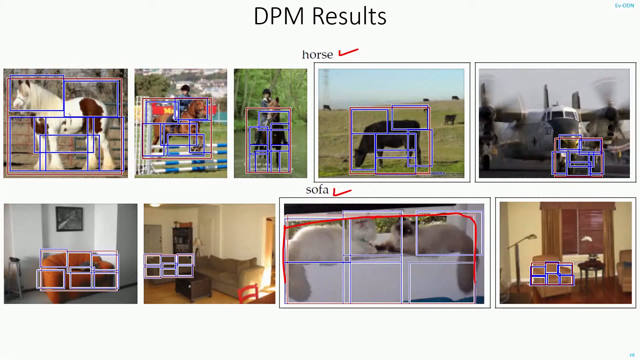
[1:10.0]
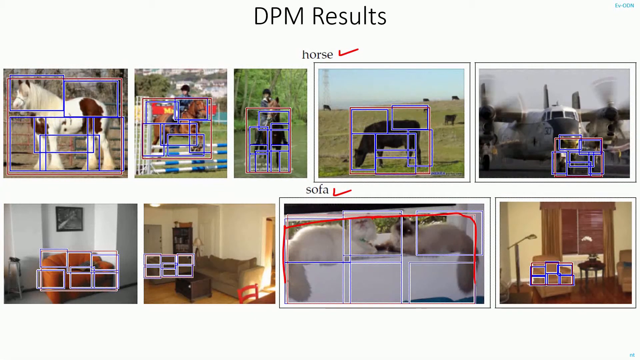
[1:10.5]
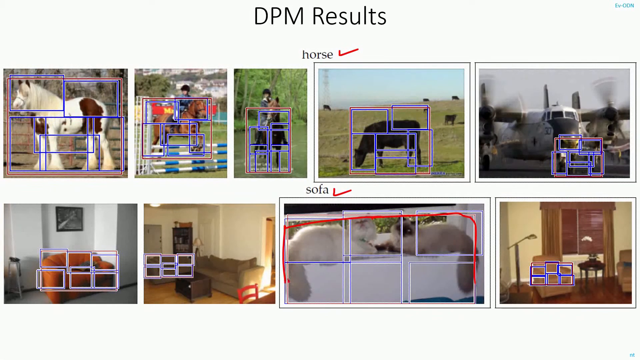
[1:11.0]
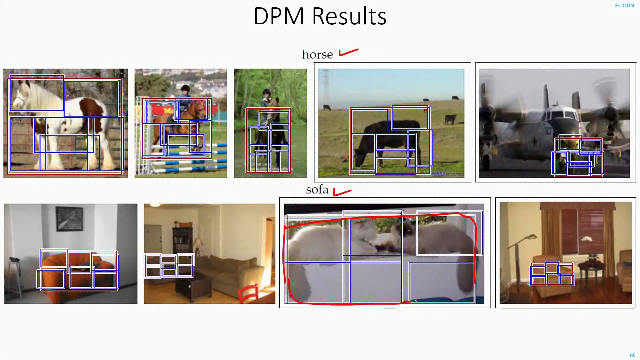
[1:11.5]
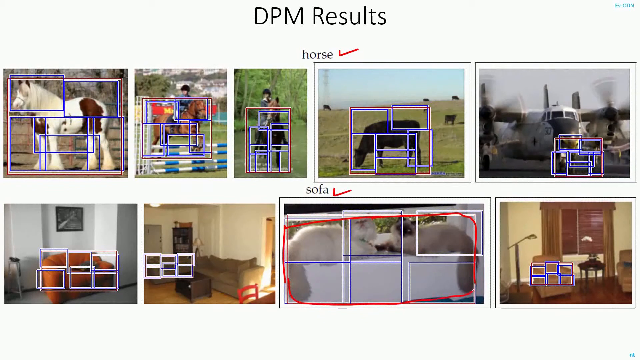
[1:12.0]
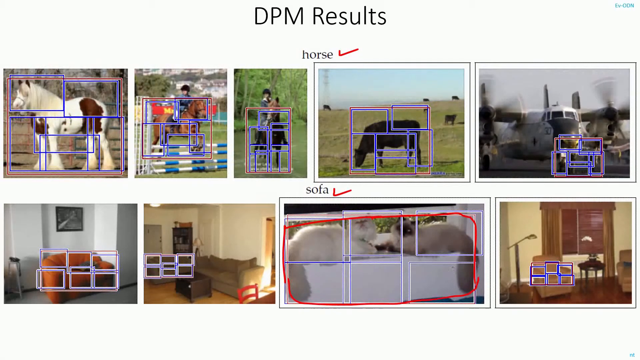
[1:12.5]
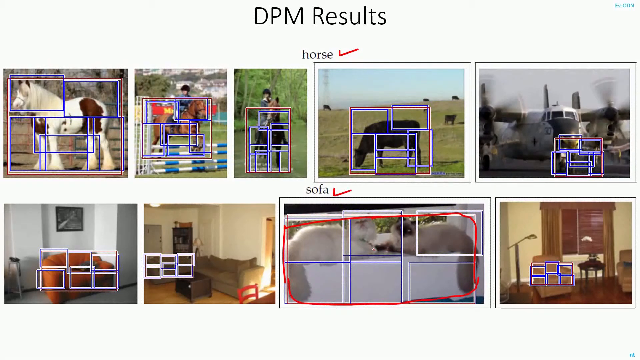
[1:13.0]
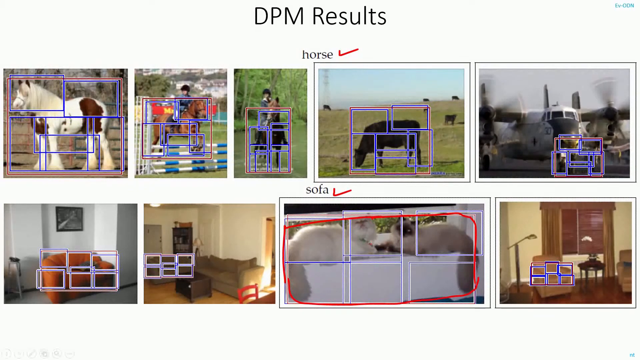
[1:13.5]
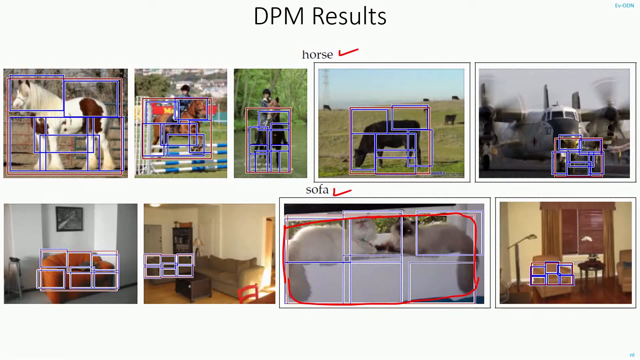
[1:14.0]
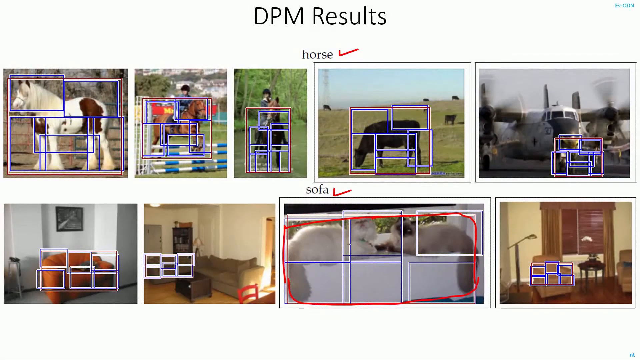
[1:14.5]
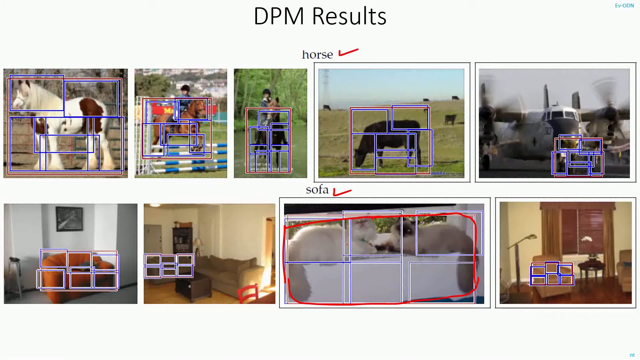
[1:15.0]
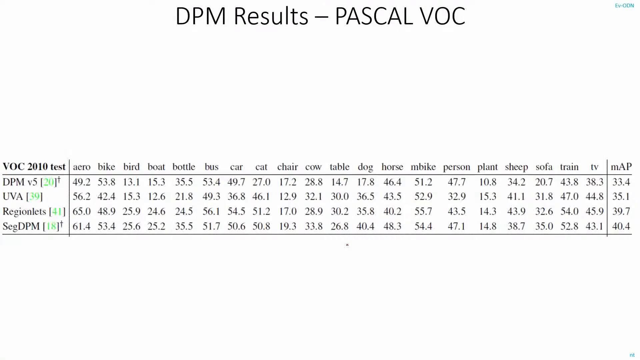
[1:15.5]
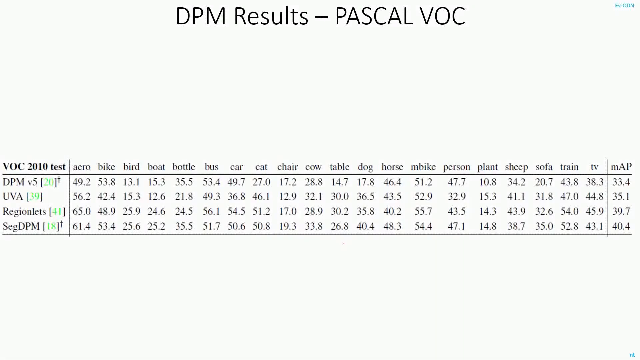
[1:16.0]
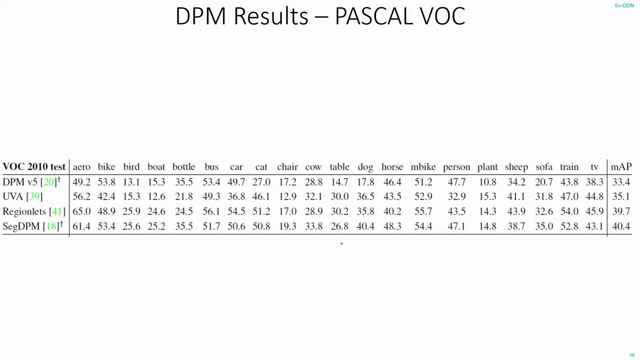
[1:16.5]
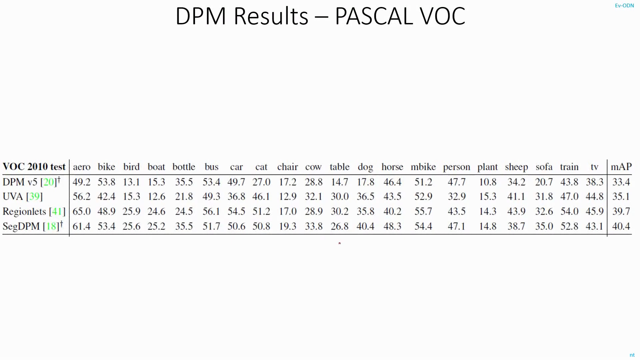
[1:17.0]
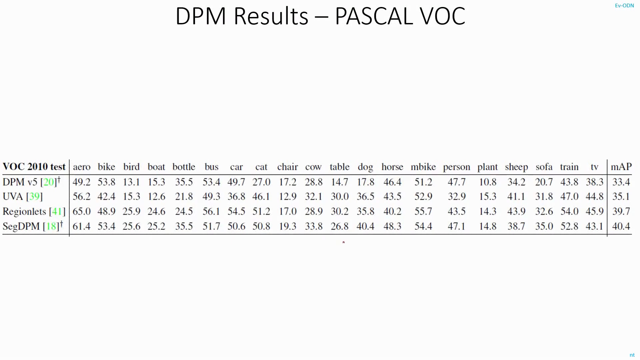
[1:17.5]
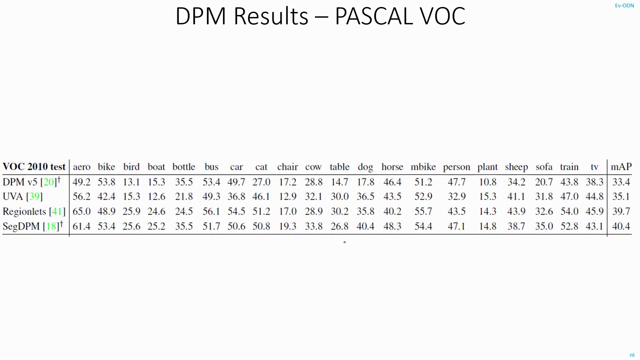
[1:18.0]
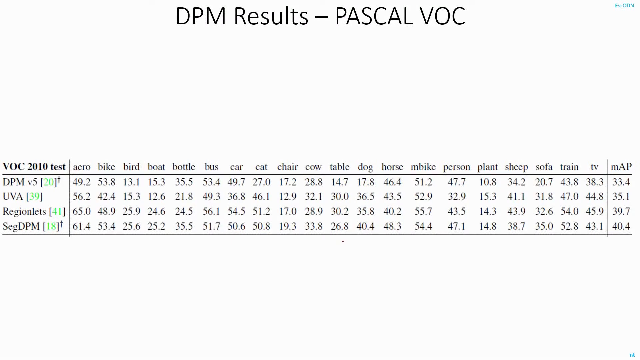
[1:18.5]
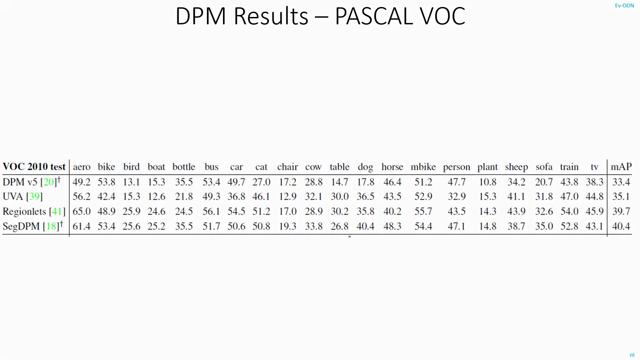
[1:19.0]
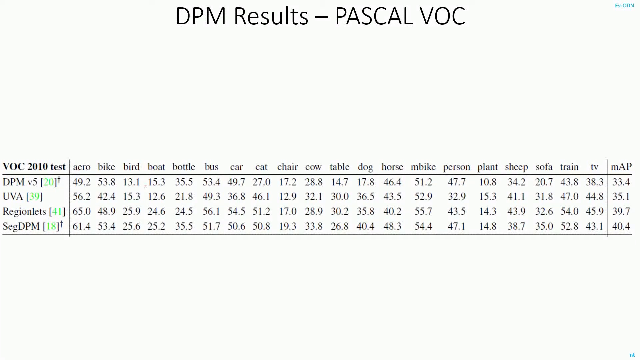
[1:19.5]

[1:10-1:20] A slide with the header "DPM Results" shows the word "horse" with a red check mark next to it and a row of five images of horses overlaid with blue and red squares and rectangles, drawn only as outlines so the animals are still visible. Below is the word "sofa" with a red check mark and four pictures of sofas, also with squares and rectangles on them. Then, as if someone is drawing freehand without the item or tool being visible, a very messy red line slowly appears around the third sofa in the row. It starts on the left about halfway up and goes up, over and down; then, almost as if the pen is lifted, it starts again on the left and goes down, over and then up to meet the other line. That all disappears, and text at the top reads "DPM Results - Pascal VOC" with a grid of numbers below.